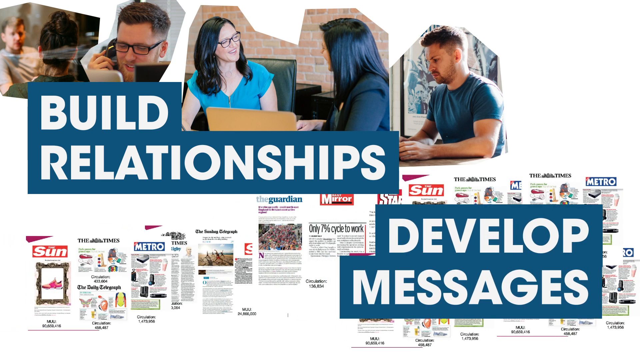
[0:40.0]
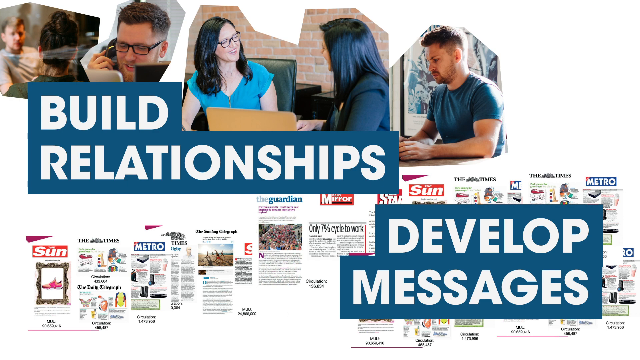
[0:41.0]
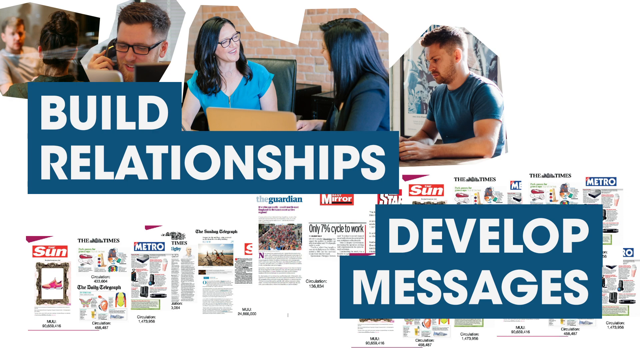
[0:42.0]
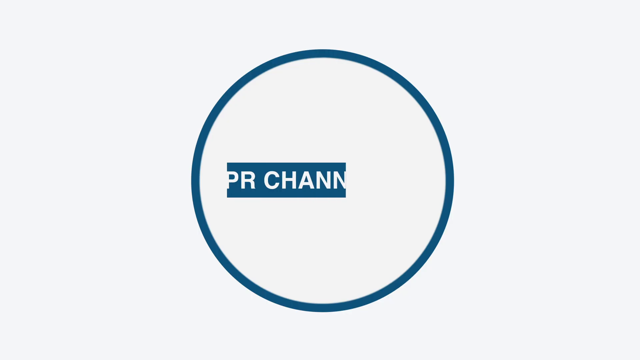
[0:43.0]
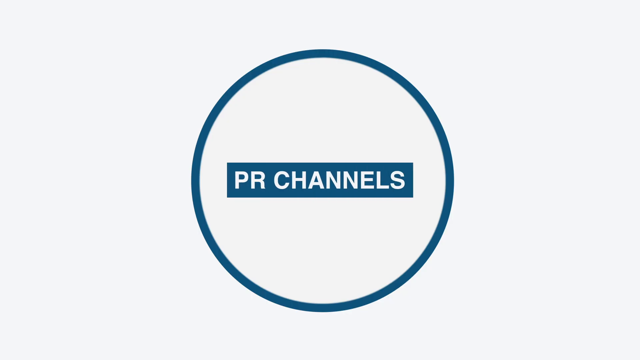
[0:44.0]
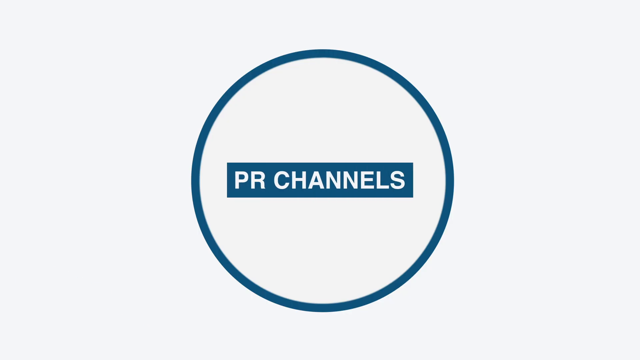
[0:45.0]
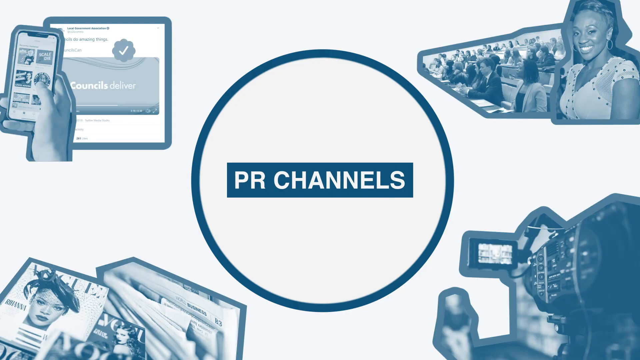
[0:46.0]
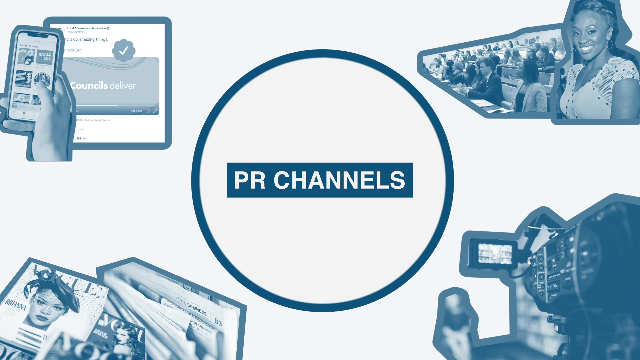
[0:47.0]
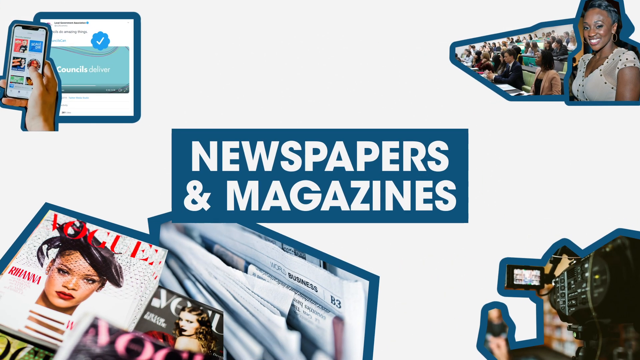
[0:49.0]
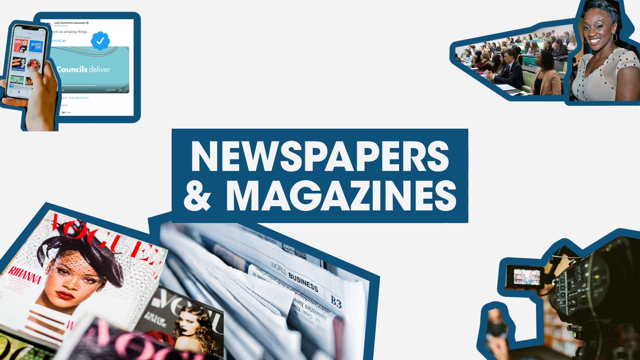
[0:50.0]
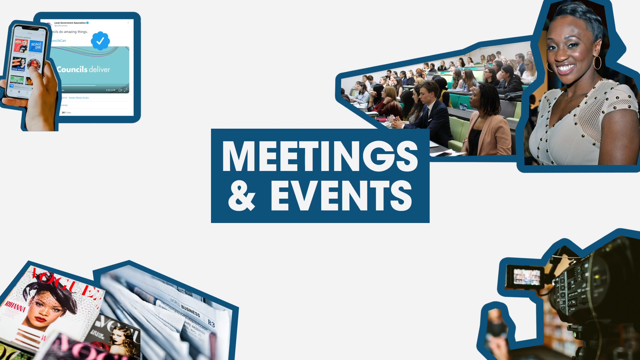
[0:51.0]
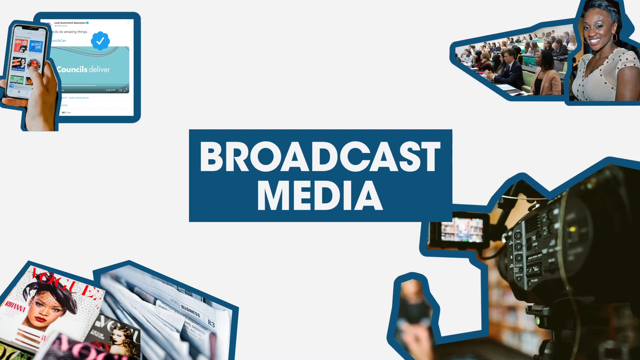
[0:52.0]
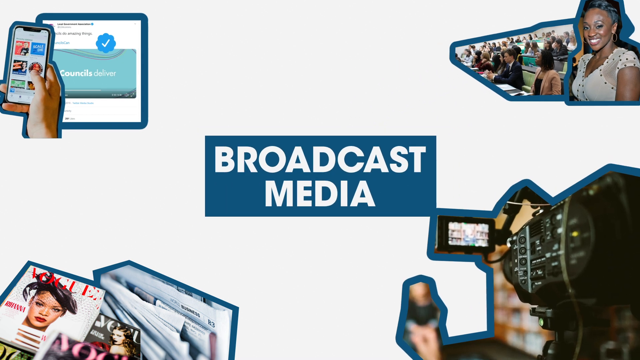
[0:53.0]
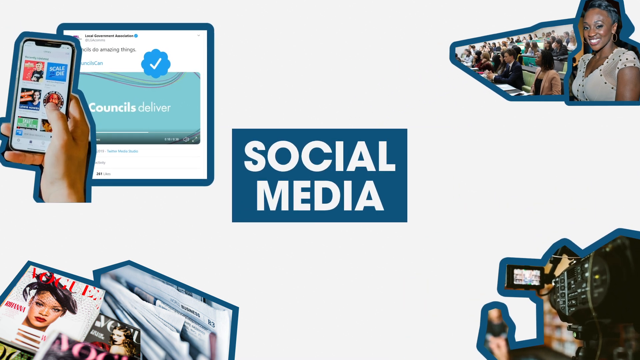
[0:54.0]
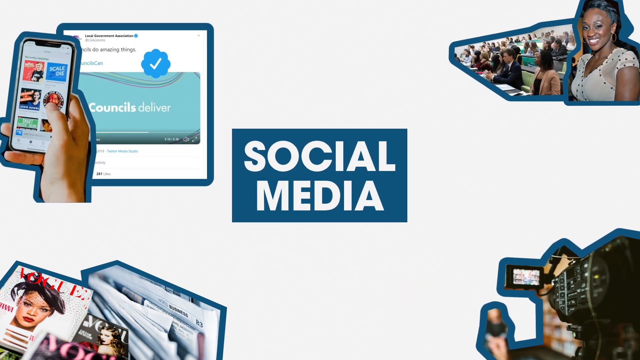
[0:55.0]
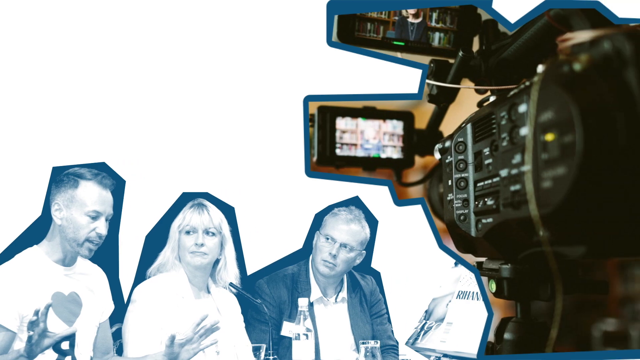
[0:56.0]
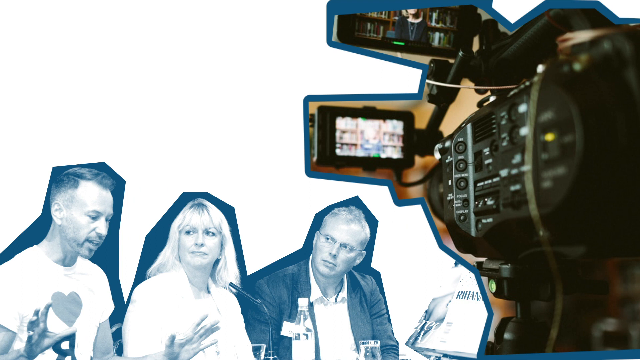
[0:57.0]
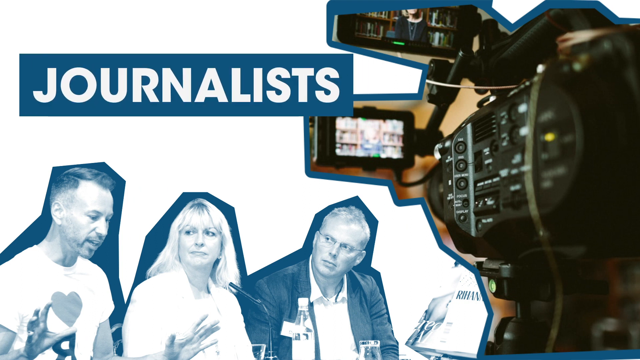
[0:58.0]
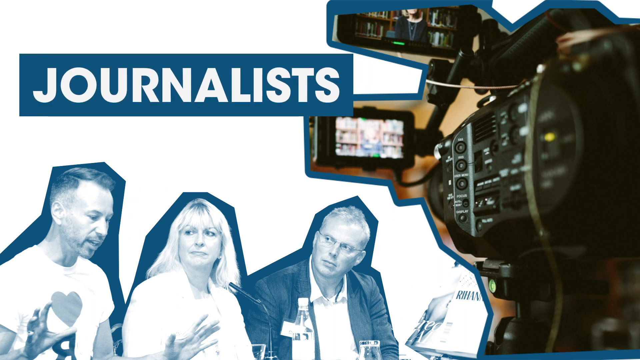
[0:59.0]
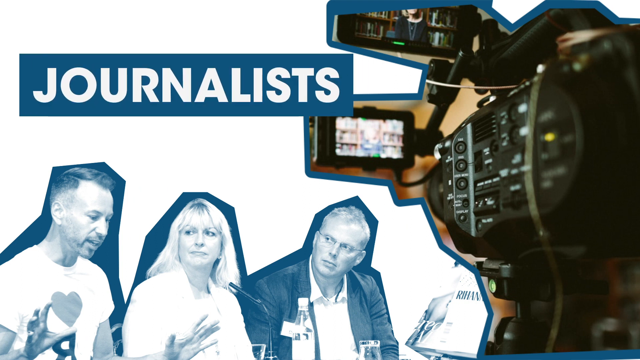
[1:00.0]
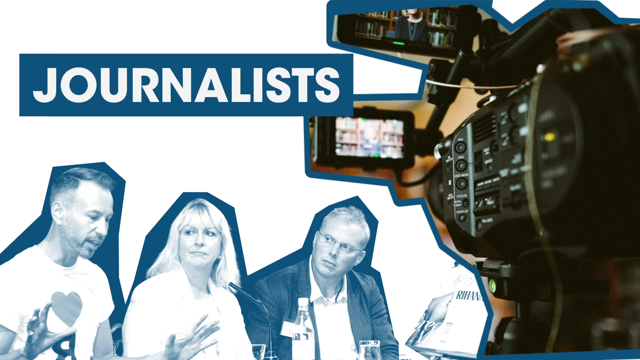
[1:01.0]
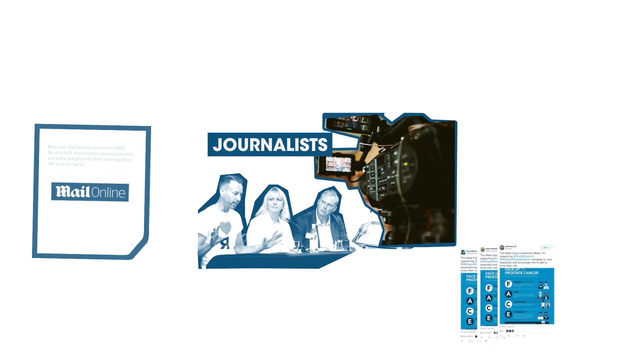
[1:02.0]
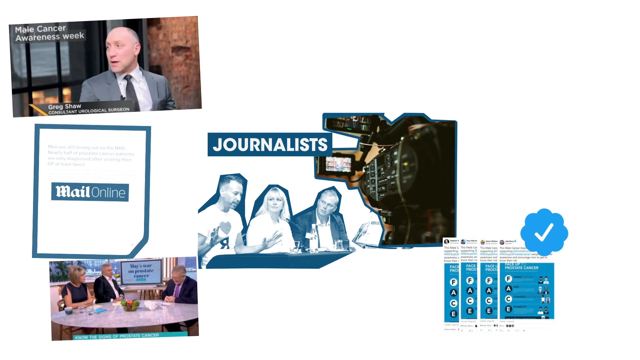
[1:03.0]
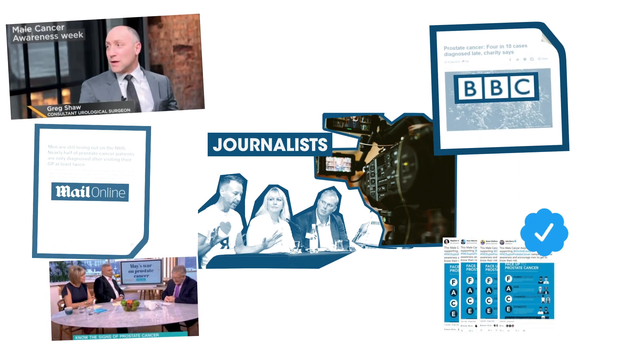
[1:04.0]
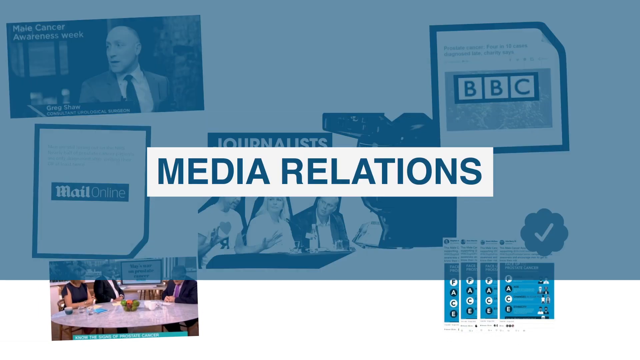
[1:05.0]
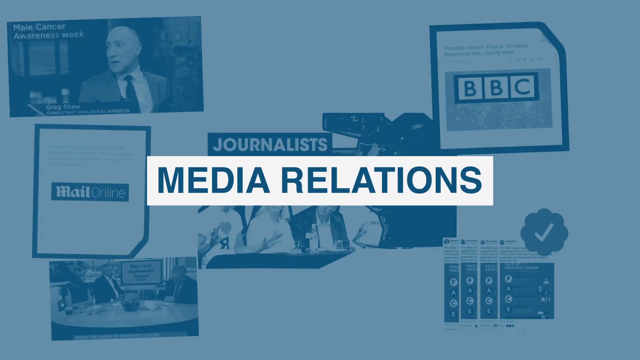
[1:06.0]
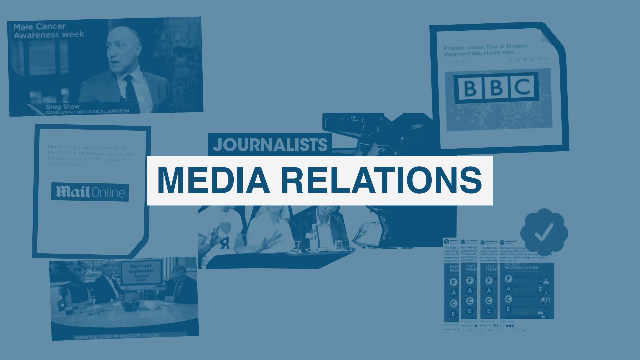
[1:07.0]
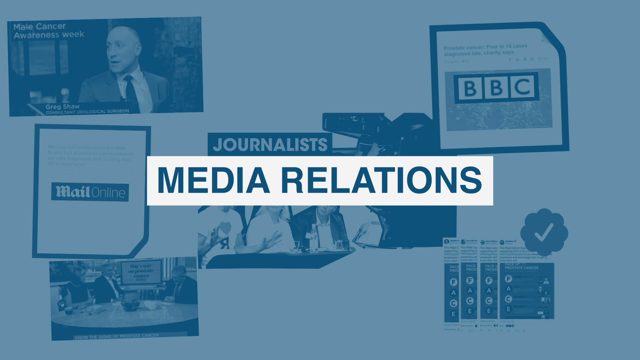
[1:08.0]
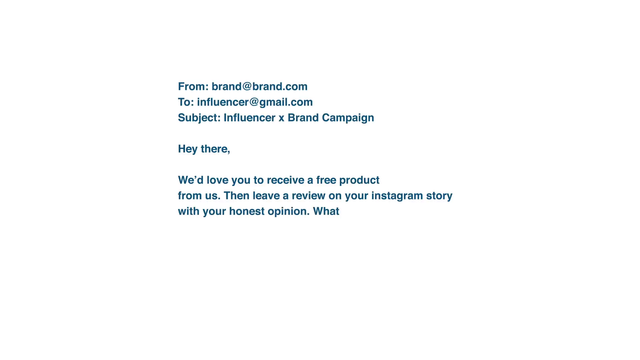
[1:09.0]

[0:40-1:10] Four people appear on the screen, all with laptops in front of them. Two women talk to each other, one of them wearing glasses, and one of the laptops is brown. A message on the screen says "build relationships, develop messages". Many newspapers are shown, including the Sun, Metro, The Guardian and The Mirror. A circular graphic then shows "PR channels" with "newspapers and magazines", "meetings and events", "broadcast media" and "social media". A video camera appears on the right with a message that says "journalists", and newspapers including the BBC, Mail and Guardian are shown.